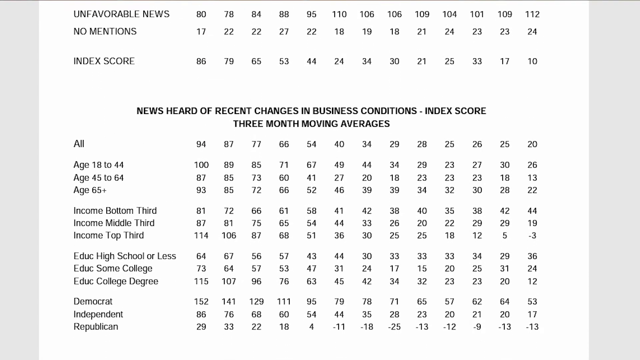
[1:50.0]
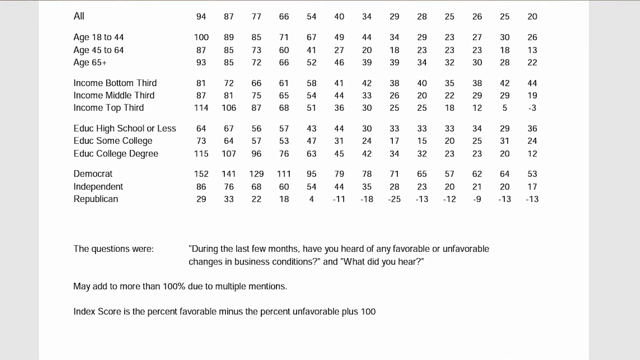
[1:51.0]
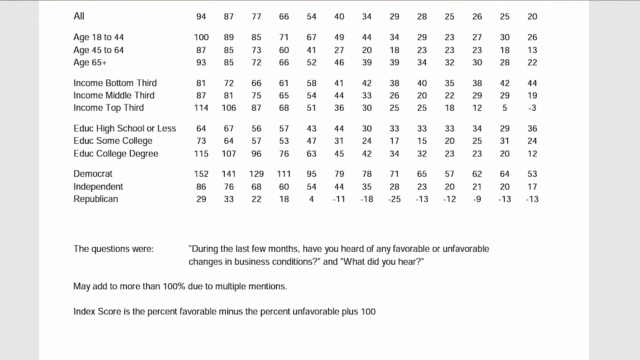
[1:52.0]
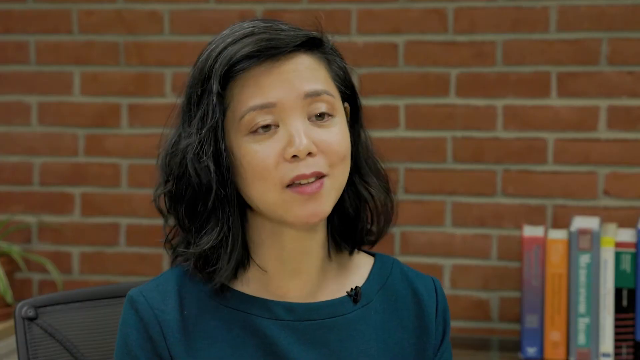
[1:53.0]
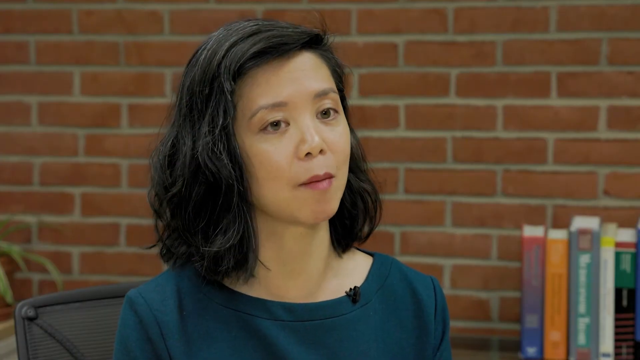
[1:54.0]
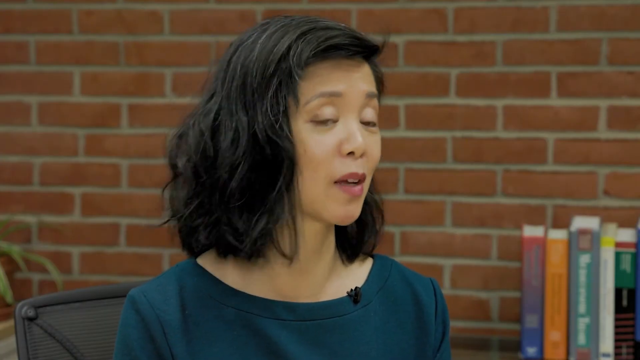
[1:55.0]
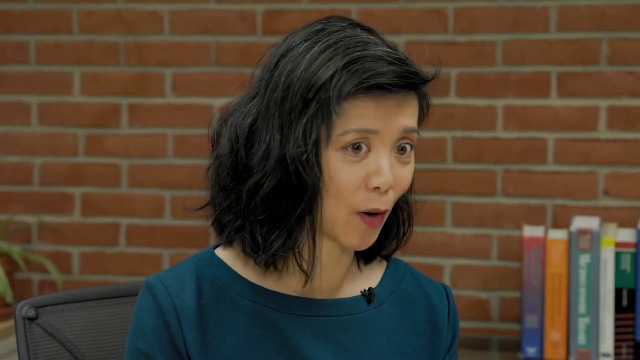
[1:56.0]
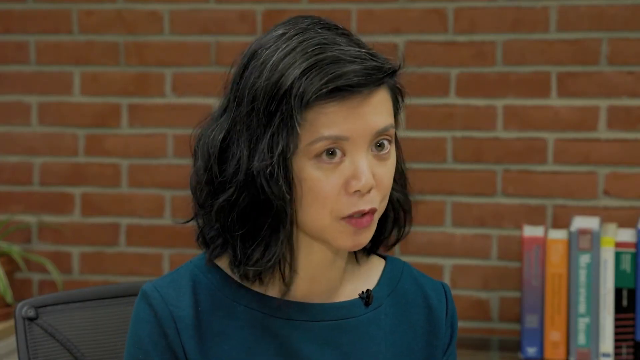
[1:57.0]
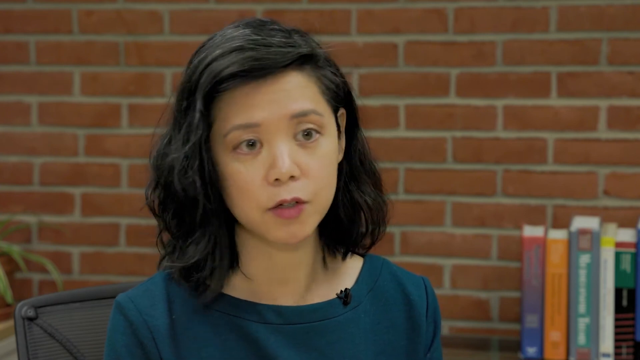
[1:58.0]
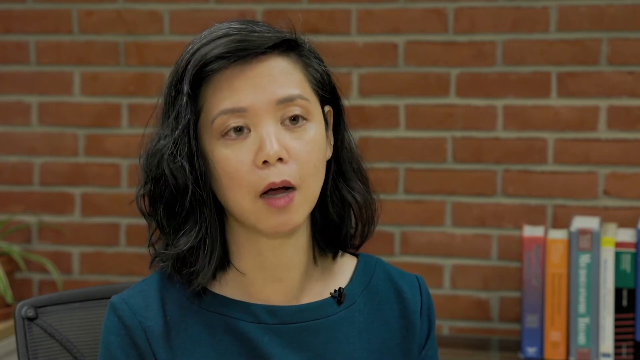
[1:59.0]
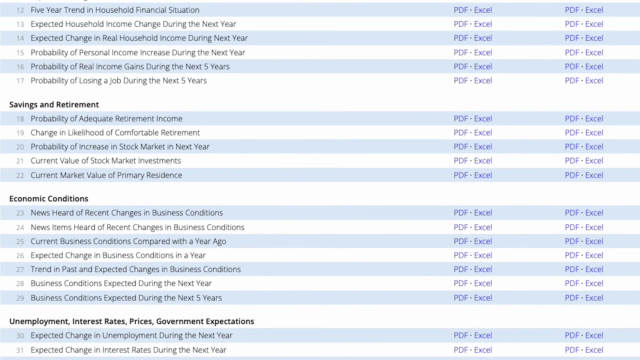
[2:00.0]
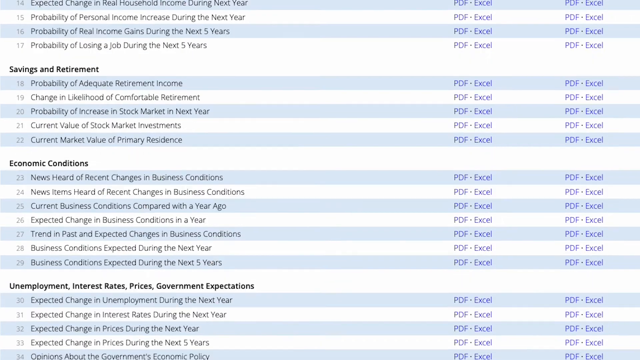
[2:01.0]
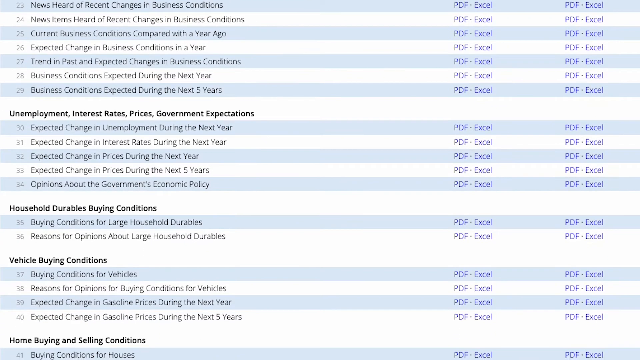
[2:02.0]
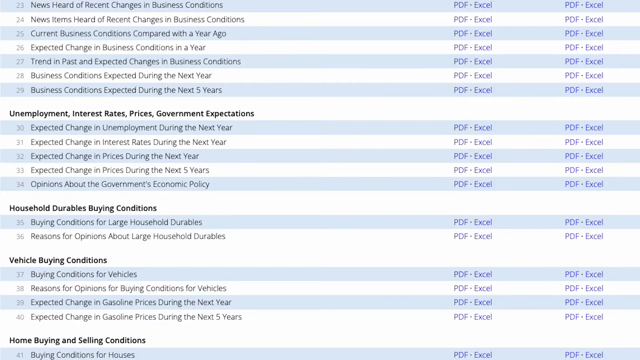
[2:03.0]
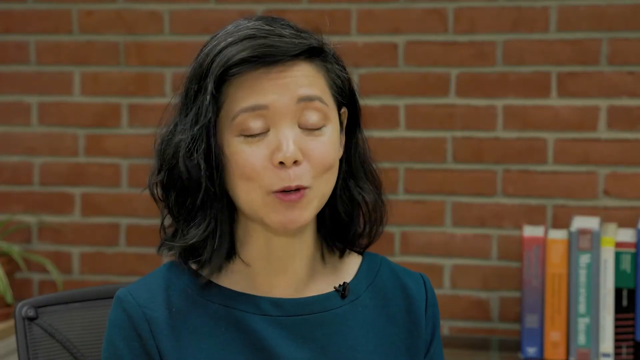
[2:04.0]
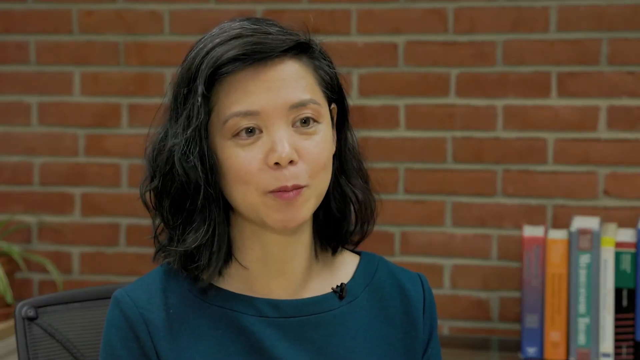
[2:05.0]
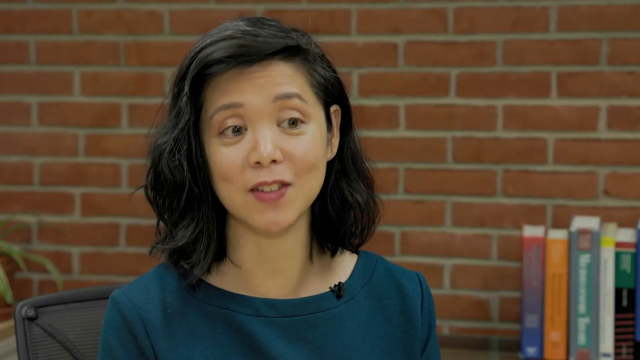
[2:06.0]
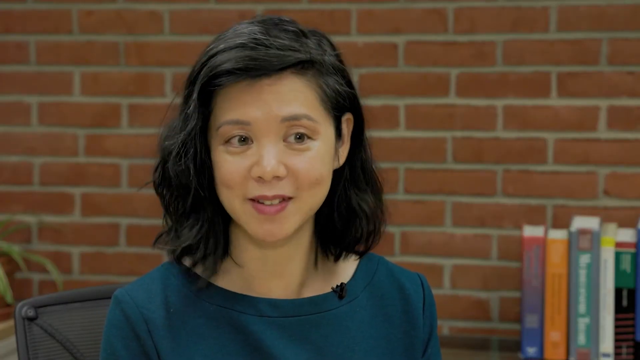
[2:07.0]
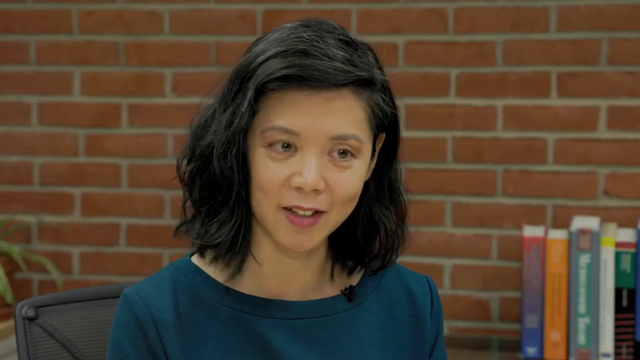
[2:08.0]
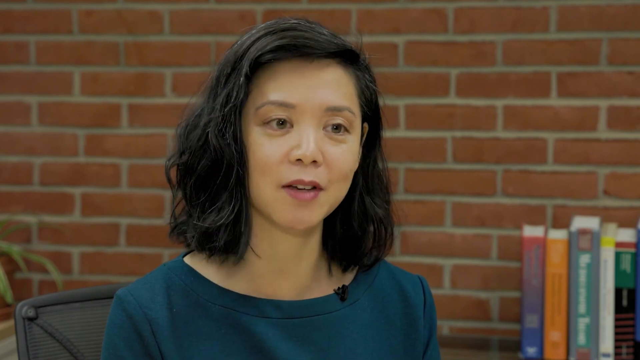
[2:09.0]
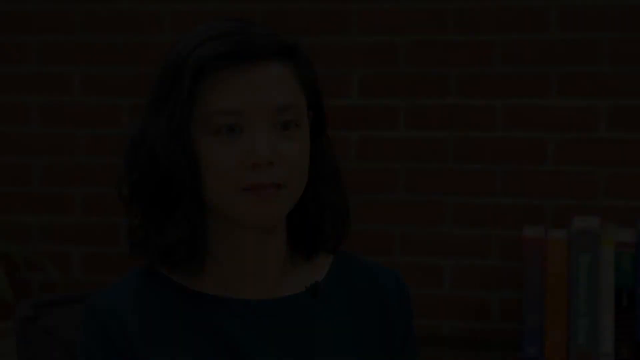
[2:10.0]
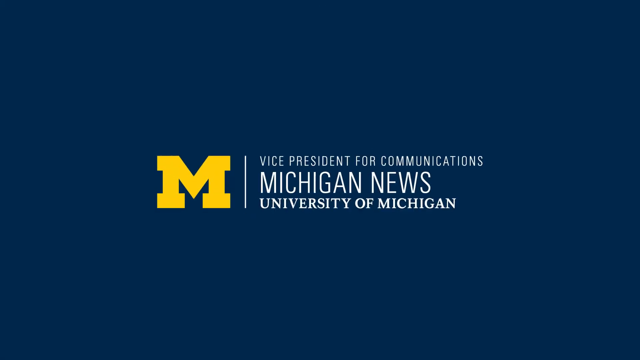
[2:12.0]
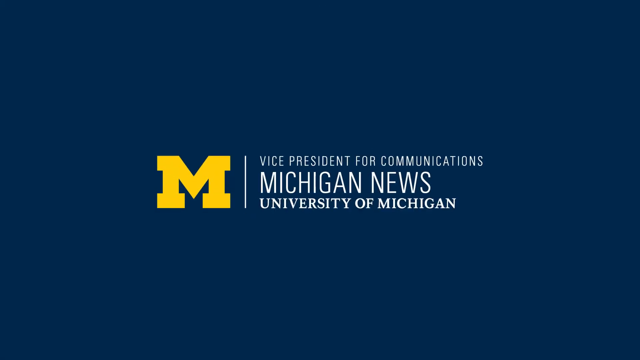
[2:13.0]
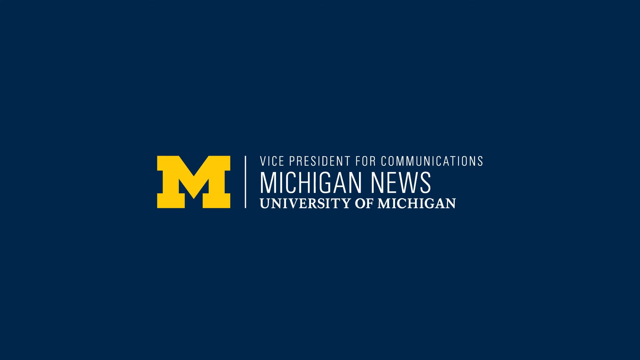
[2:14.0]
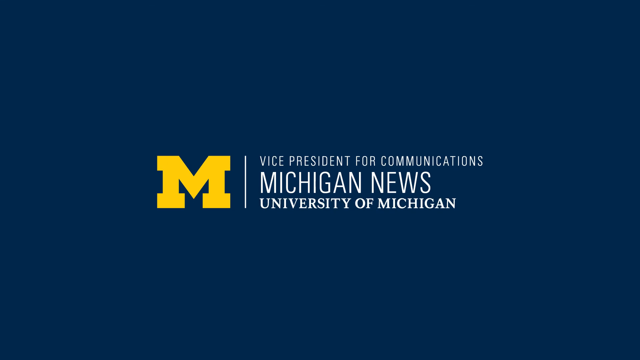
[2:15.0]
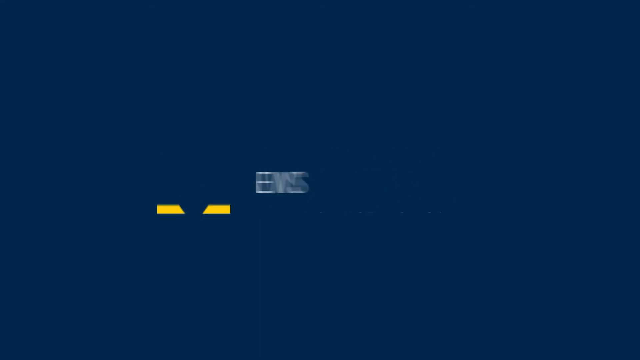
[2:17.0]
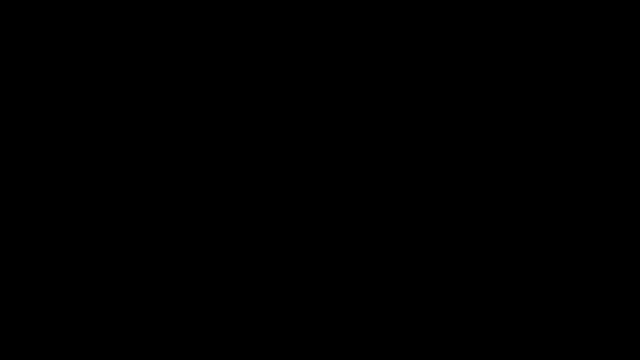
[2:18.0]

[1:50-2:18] More chart information appears, broken down by age (18 to 44, 45 to 64, and 65 and up), by education level (high school or less, some college, college degrees), and by Democrats, Independents and Republicans. The question shown is "during the last few months, have you heard any favorable or unfavorable changes in business conditions and what did you hear?" The video returns to Director Joanne, scrolls up and down the chart, and goes back to Director Joanne. After the main video ends, a screen with a blue background shows the Michigan University logo and the text "Vice President for Communications, Michigan News, University of Michigan."